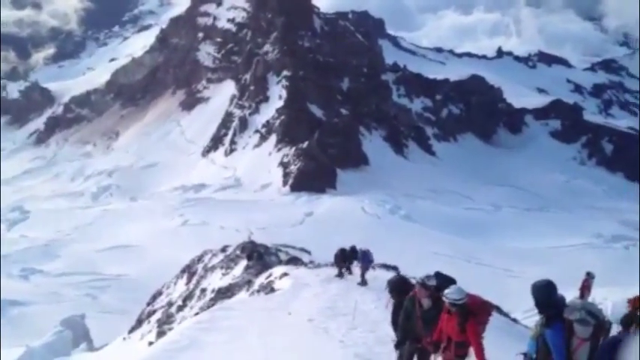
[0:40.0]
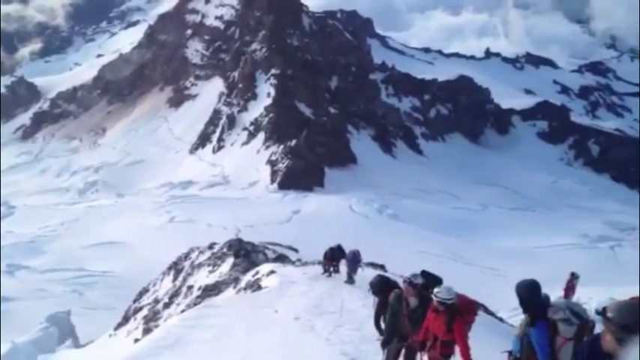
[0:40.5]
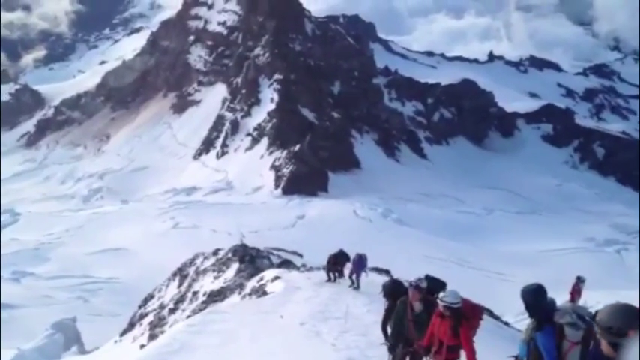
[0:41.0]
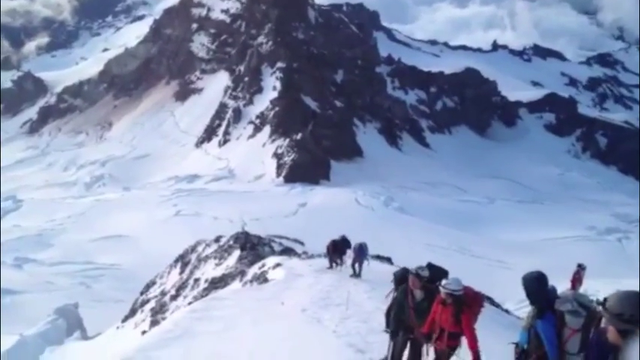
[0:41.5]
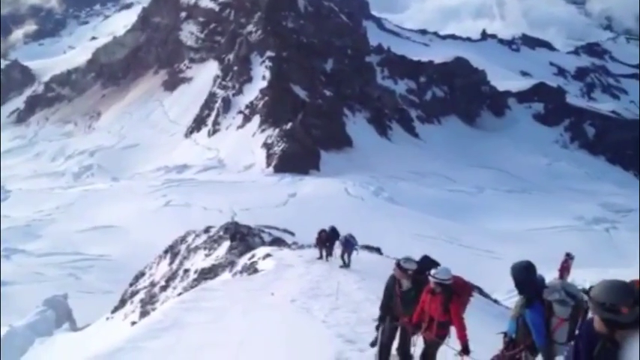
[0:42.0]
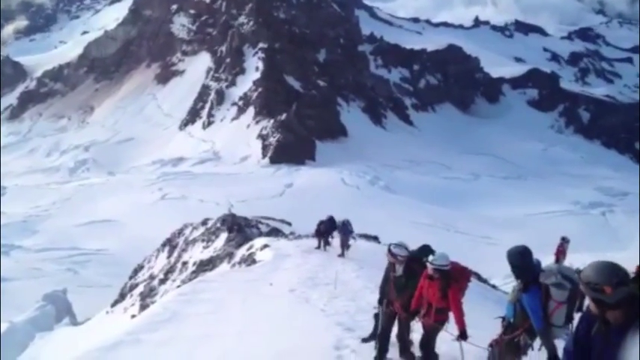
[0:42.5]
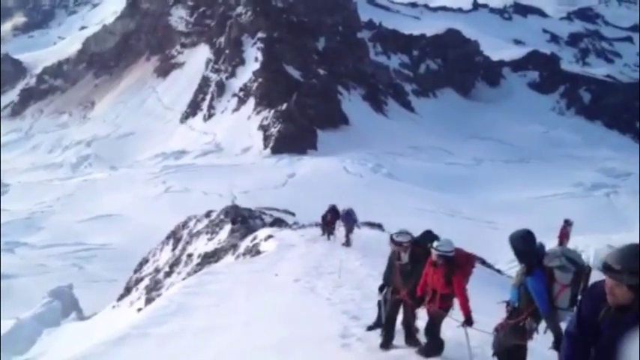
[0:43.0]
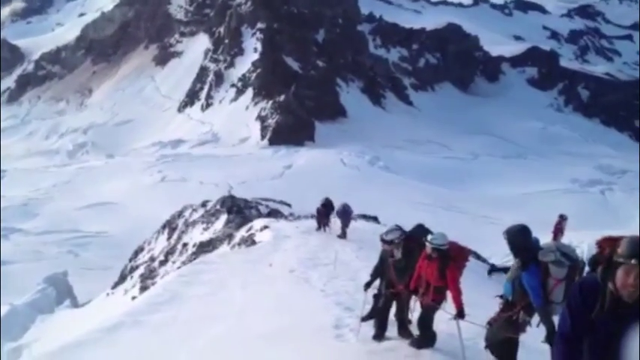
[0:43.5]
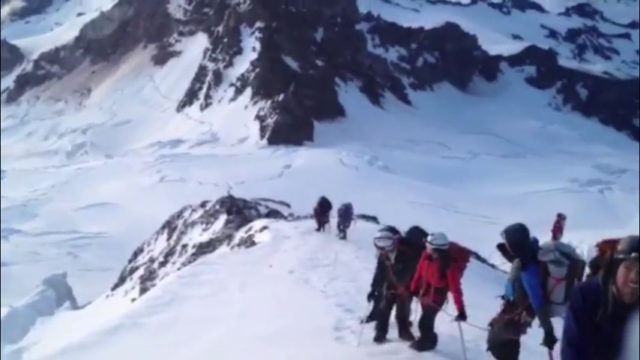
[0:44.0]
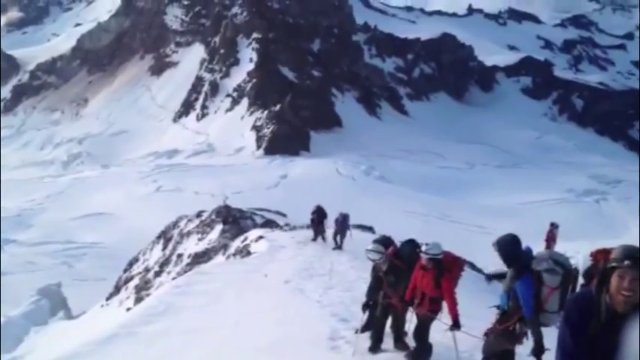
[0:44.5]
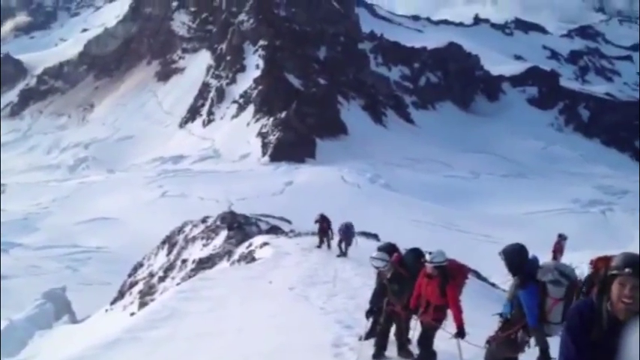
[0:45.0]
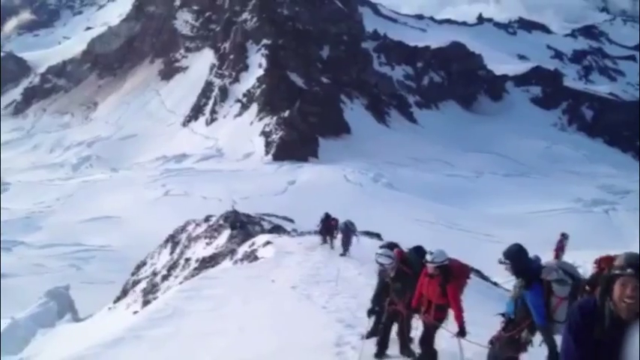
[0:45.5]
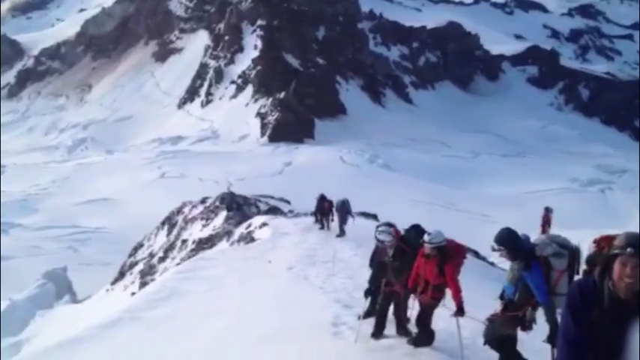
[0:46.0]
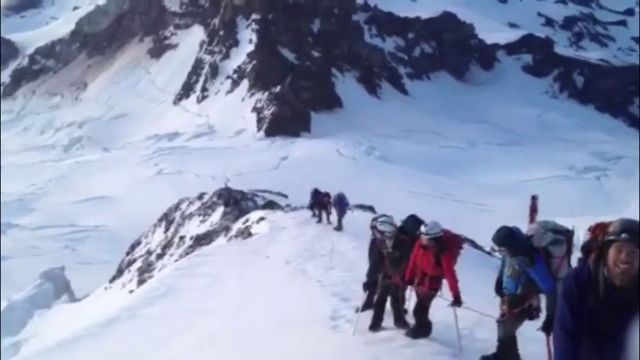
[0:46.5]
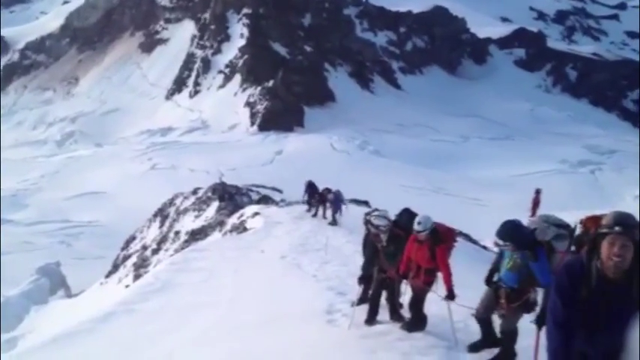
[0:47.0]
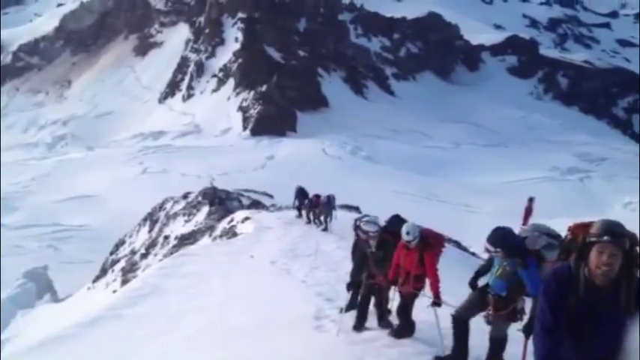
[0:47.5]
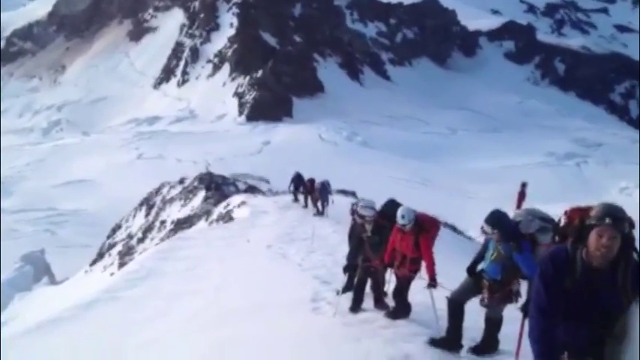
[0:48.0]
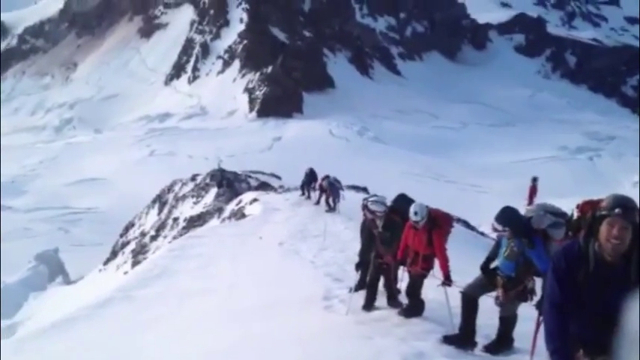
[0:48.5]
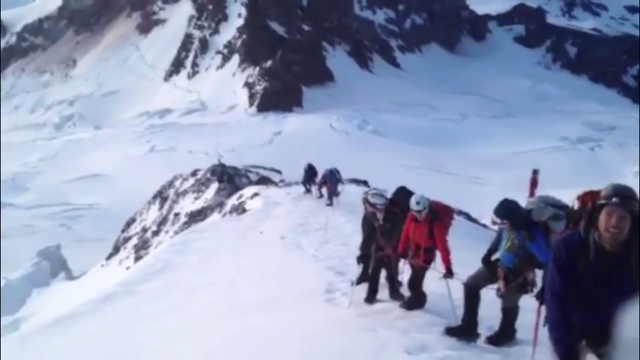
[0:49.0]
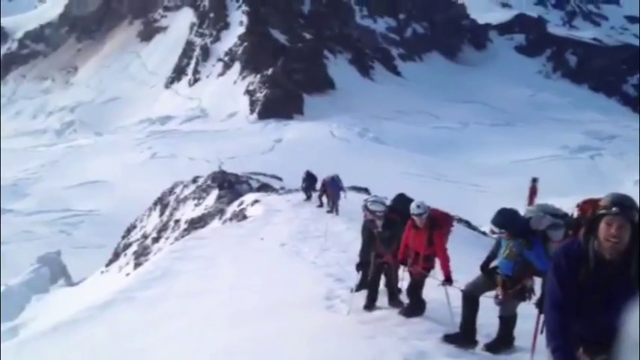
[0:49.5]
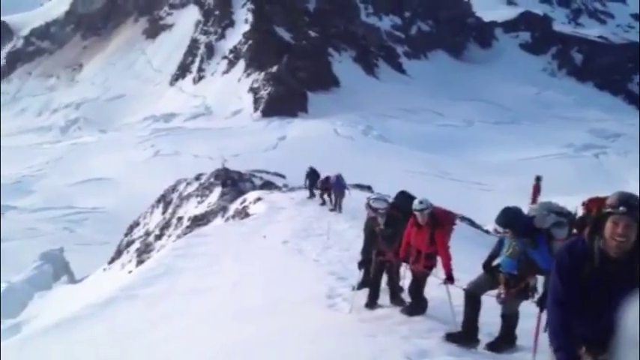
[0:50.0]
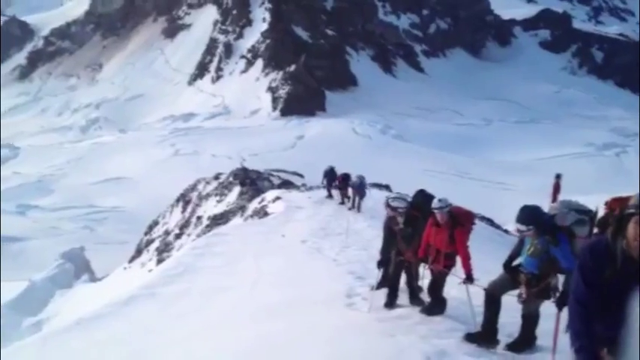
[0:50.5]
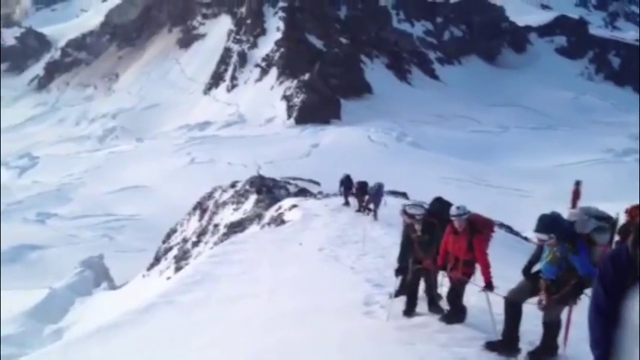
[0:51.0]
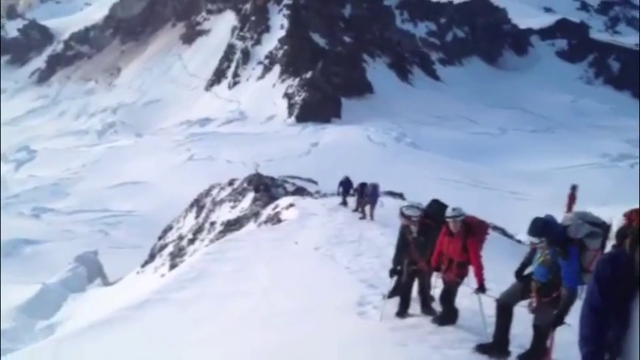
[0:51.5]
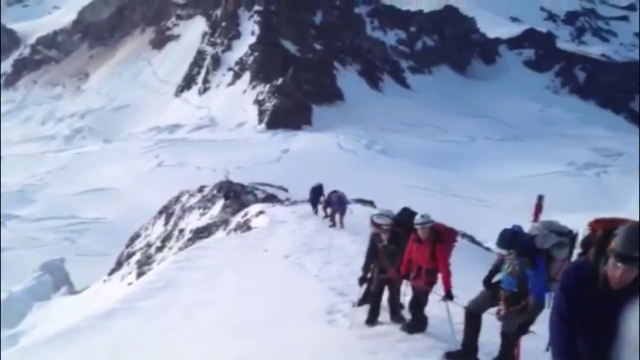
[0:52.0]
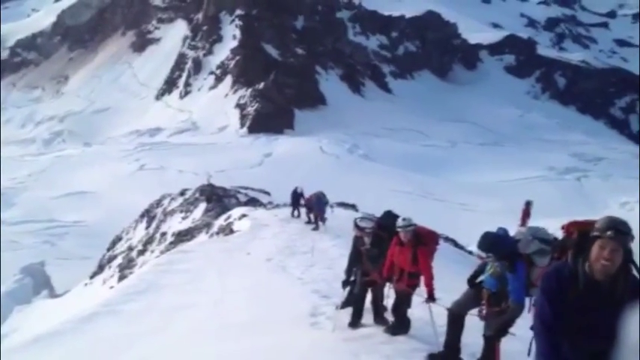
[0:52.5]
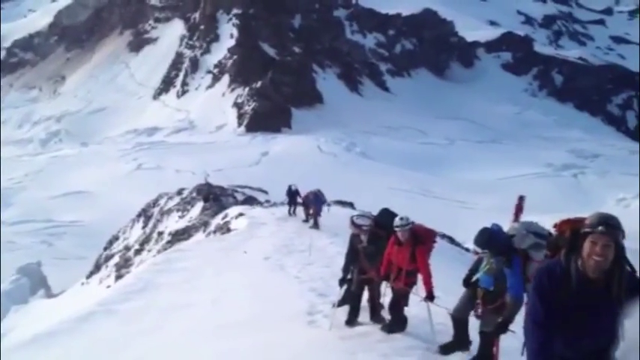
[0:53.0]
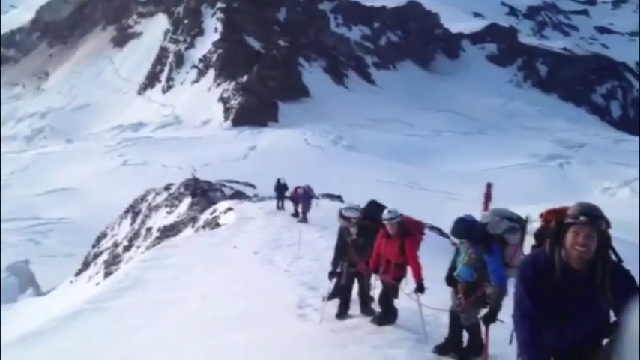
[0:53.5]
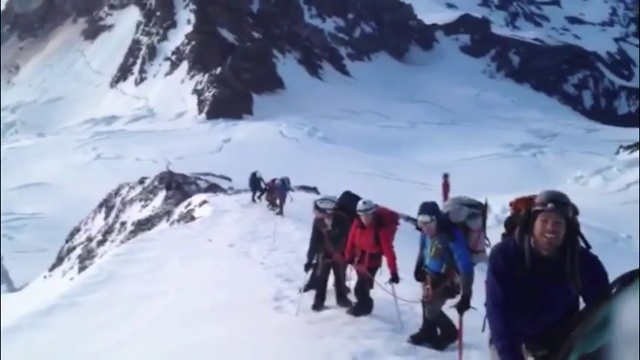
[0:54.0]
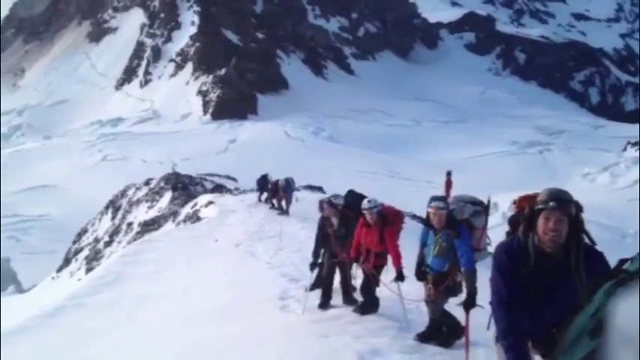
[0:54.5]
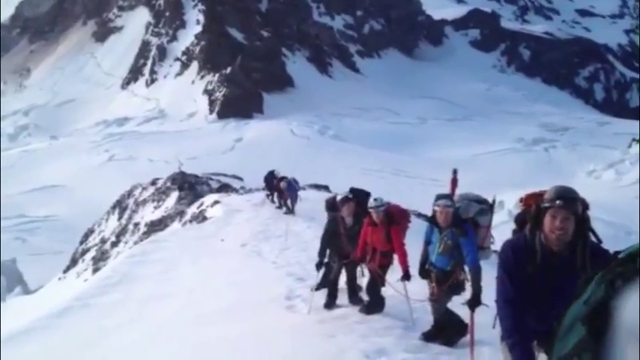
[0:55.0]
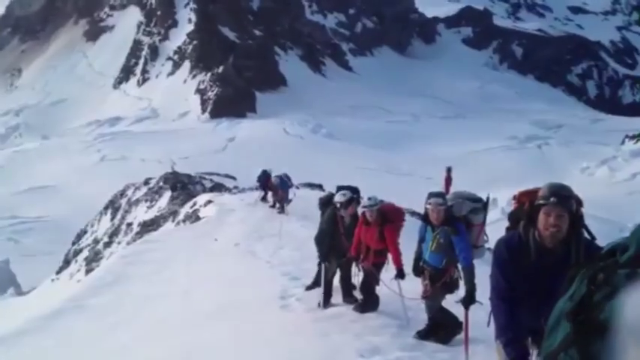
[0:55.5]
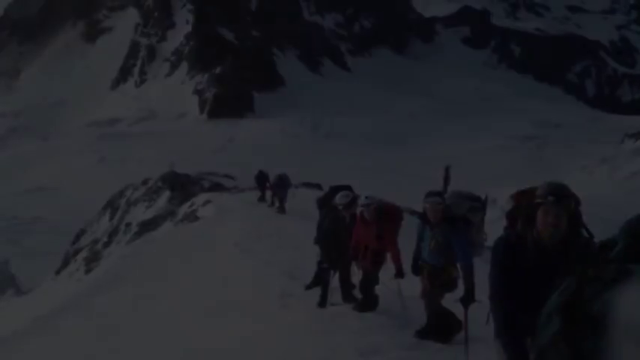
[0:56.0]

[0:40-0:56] Individuals try to get up the mountain wearing protective footwear, apparently holding something in their hands to stay steady that looks like a cane. Up close, the camera shows people from one of the groups holding this cane-like tool: one man holds one in his left hand, and the woman in red gear holds a cane in her left hand. The tool has a curved end with what looks like a sharp edge, so it seems to possibly be used for climbing the mountain. The people behind, apparently three of them, use the device to get up closer to the main group. It seems to be a really slow task, but they make progress by taking their time.